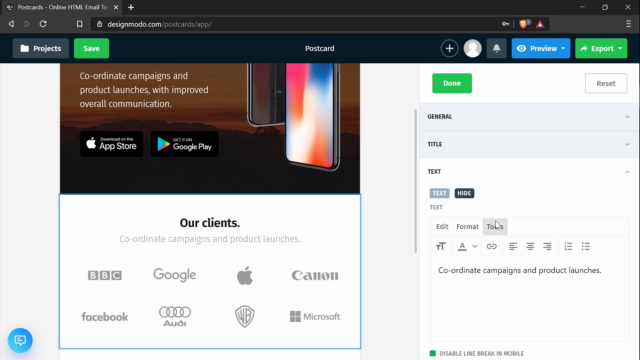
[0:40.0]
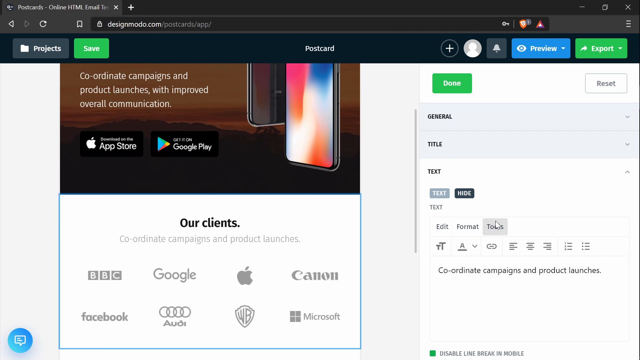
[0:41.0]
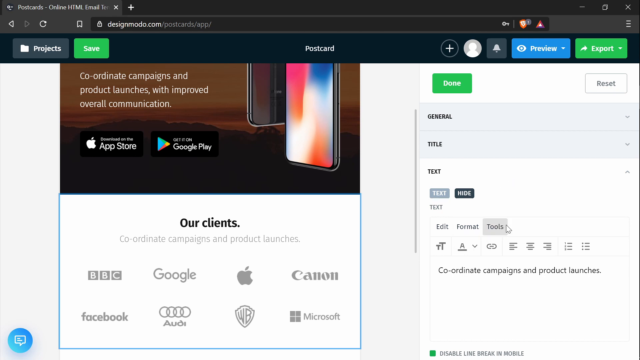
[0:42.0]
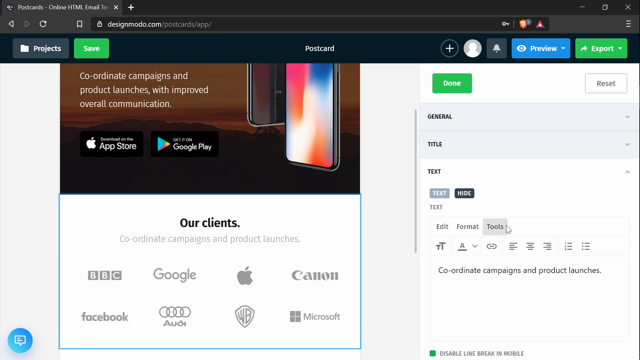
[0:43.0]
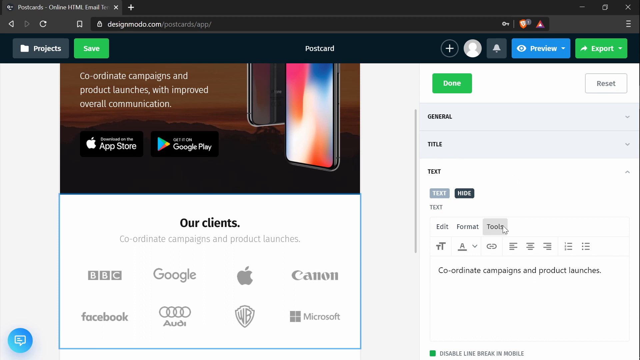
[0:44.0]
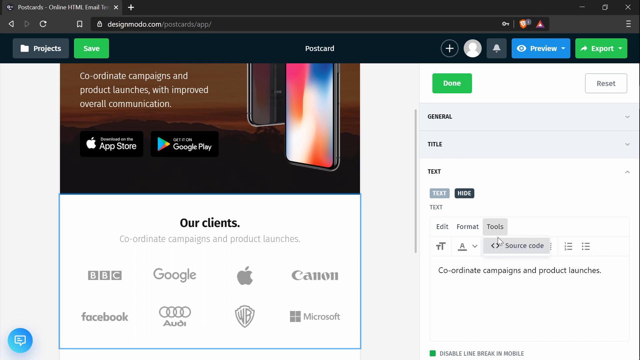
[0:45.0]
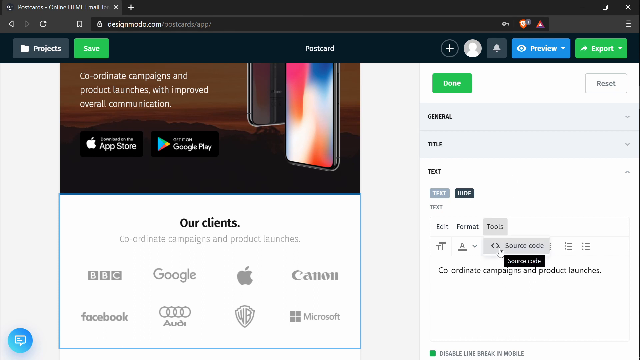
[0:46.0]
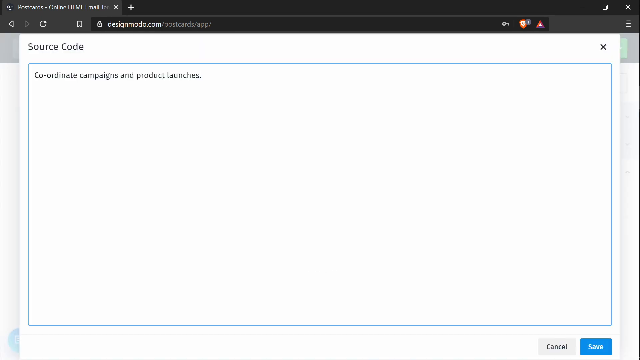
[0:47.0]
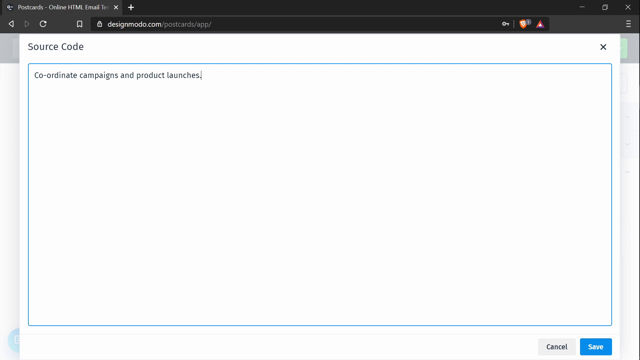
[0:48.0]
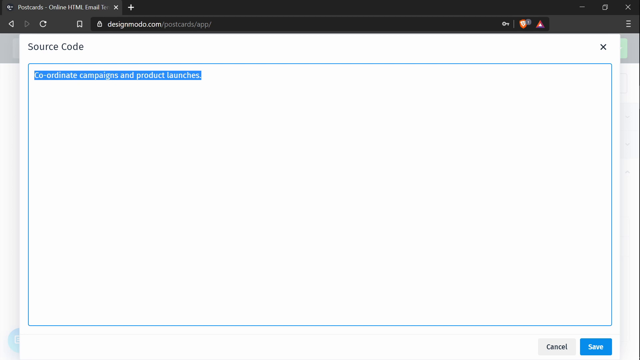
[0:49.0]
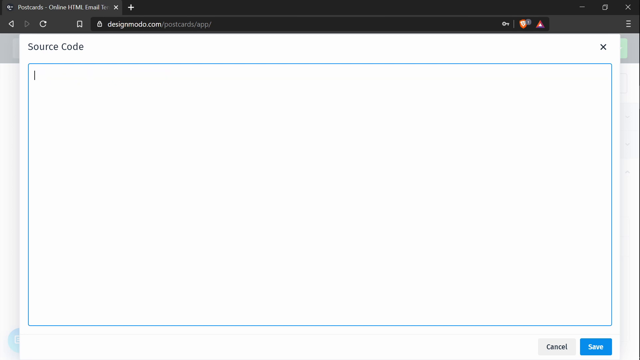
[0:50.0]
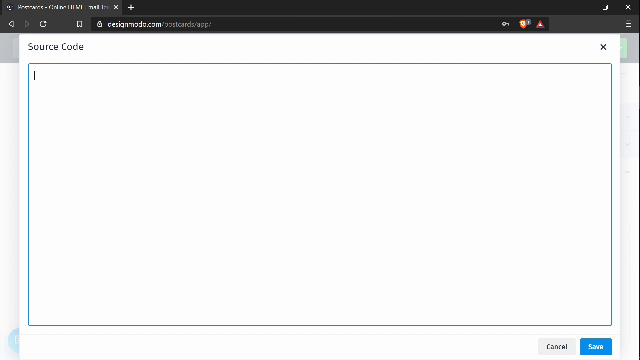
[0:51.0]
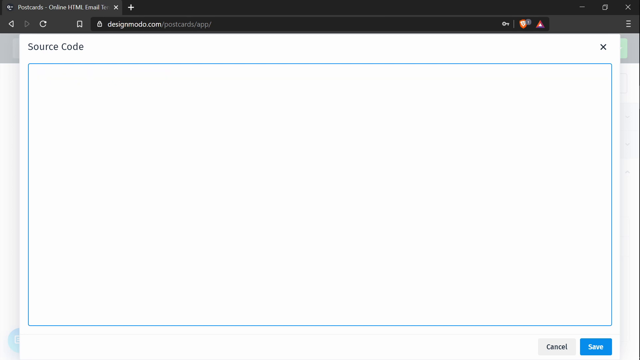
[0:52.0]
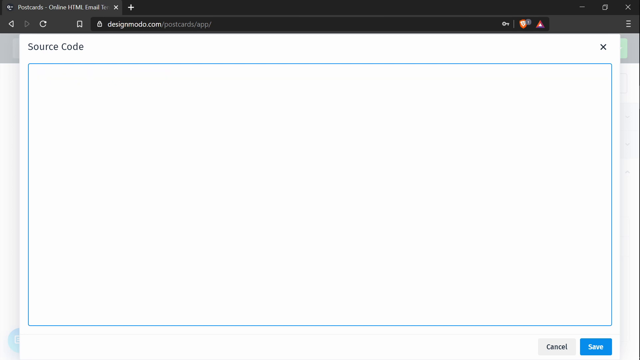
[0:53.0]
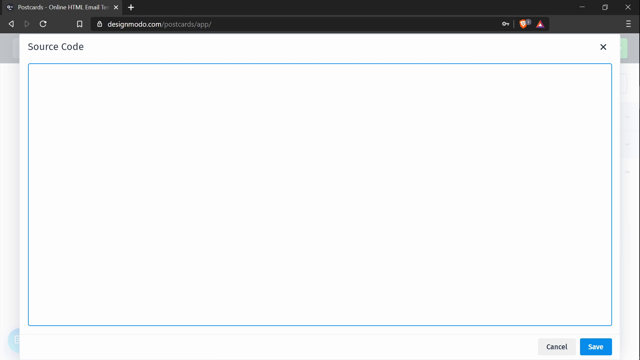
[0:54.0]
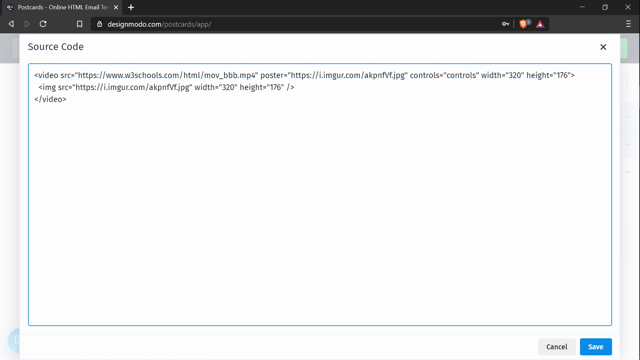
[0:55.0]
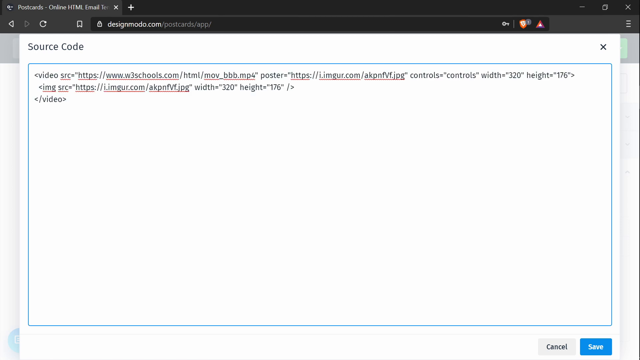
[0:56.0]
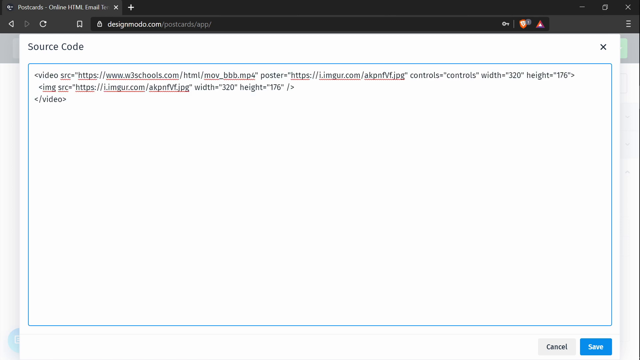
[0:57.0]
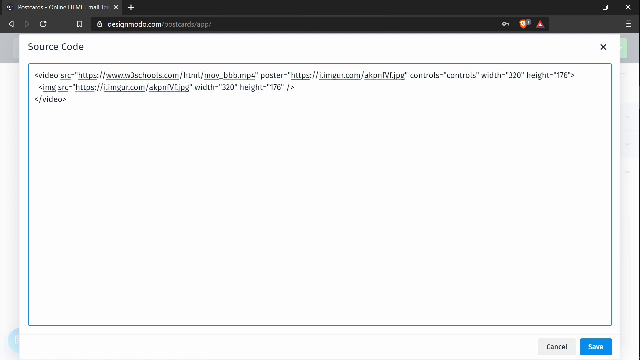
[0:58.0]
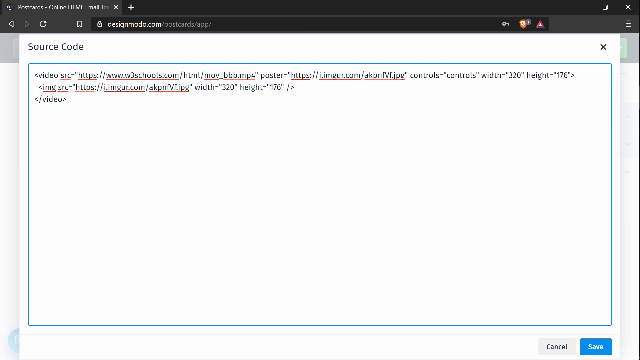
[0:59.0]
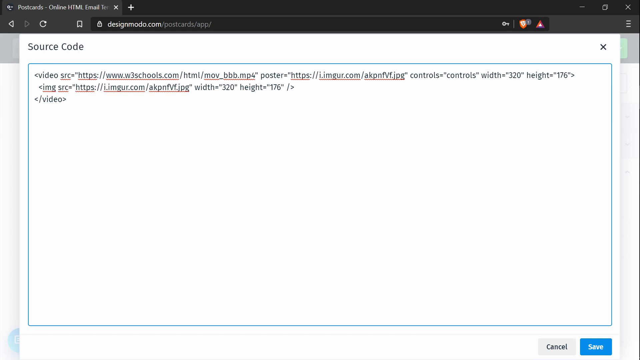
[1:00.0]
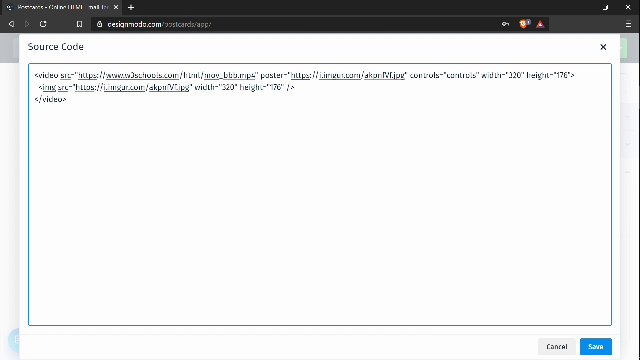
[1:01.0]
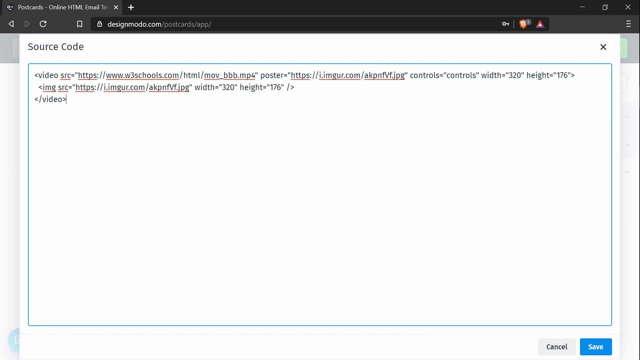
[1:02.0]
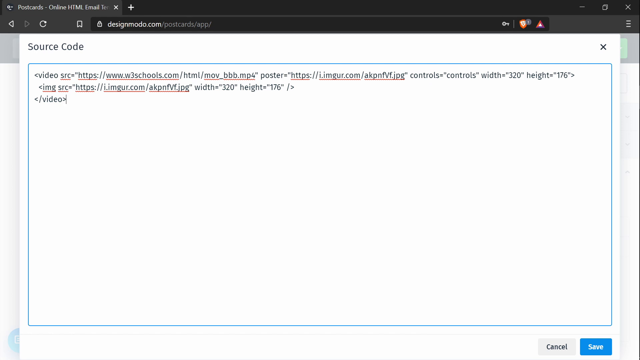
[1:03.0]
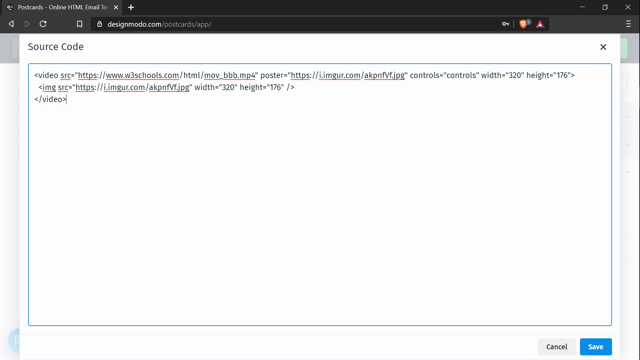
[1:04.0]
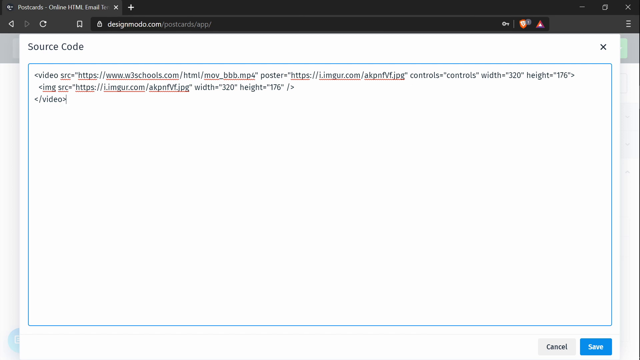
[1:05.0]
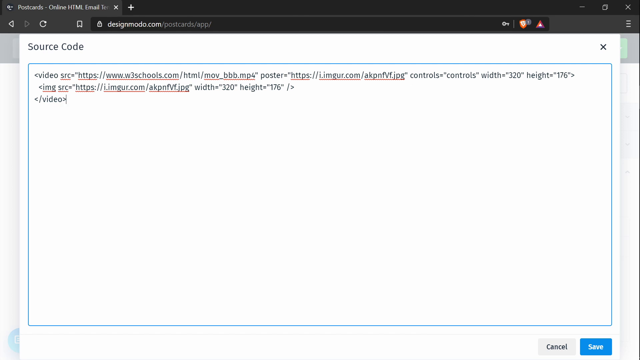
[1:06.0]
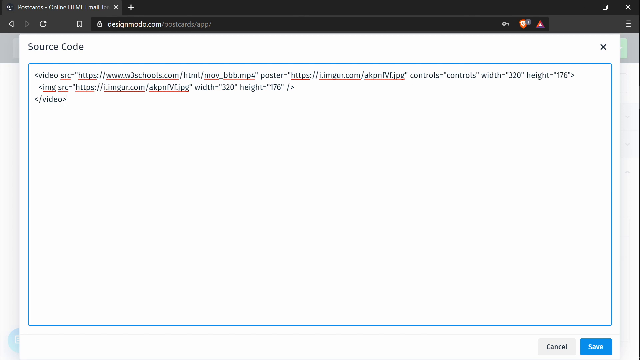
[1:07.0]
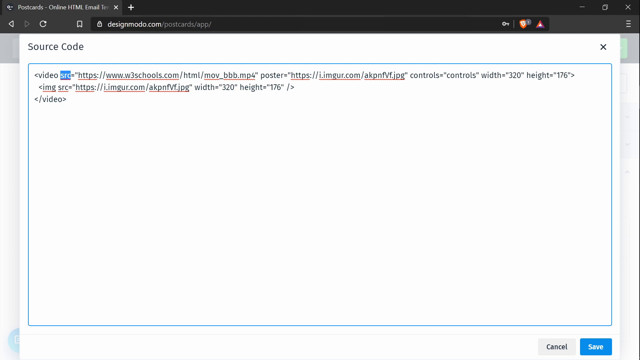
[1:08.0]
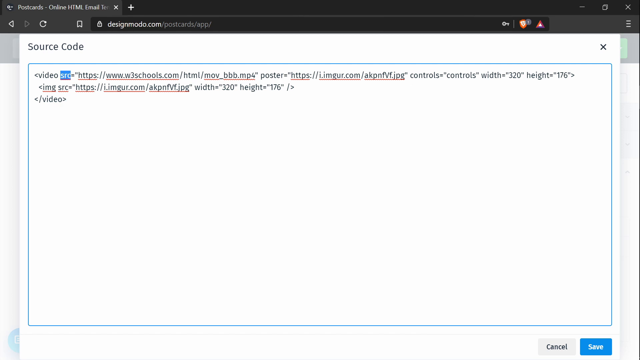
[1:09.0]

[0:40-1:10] Under Text there are three options: edit, format and tools. The person clicks on tools, which opens a drop-down with one option, source code, and they click it. A large white text box appears with the title "source code" at the top, containing the text "coordinate campaigns and product launches." The person highlights that text in blue and deletes it, leaving the text box blank. The cursor is seen clicking in the left-hand corner before they paste in a long block of text that starts with "video src" followed by a web page link to w3schools.com and three other links to other websites. They then press Save in the bottom right corner. At the top of the screen the tab still reads postcards HTML.